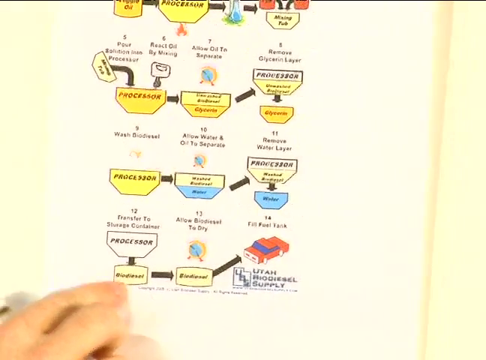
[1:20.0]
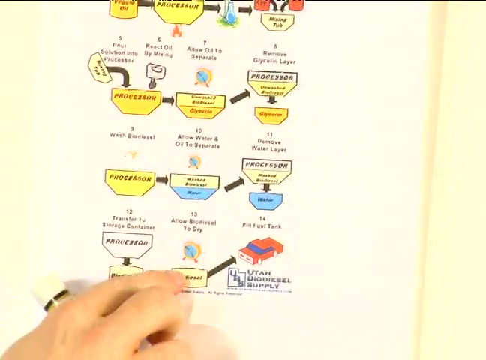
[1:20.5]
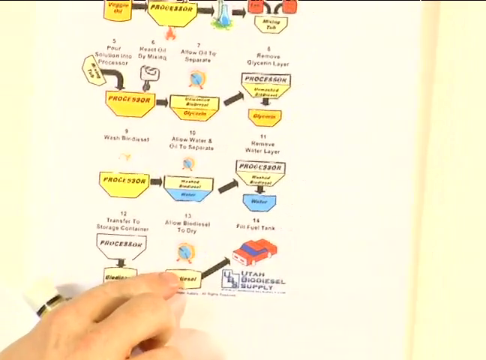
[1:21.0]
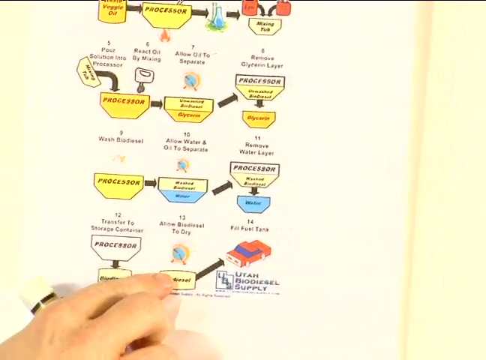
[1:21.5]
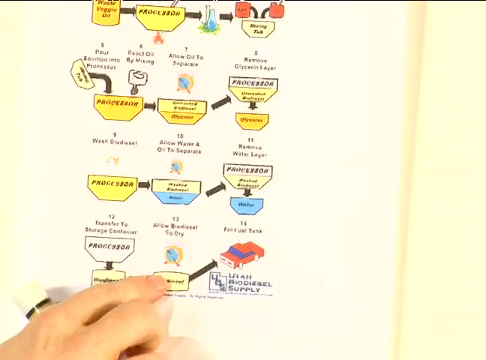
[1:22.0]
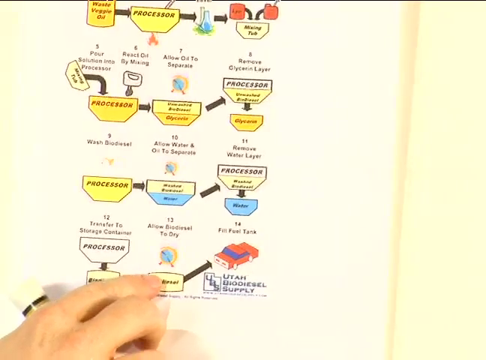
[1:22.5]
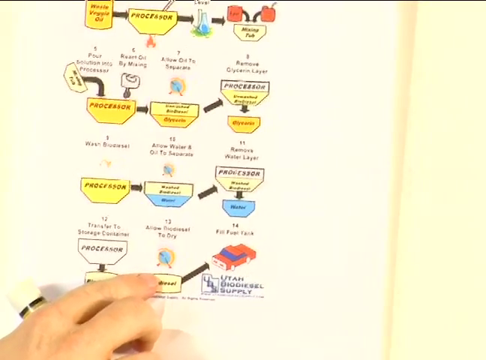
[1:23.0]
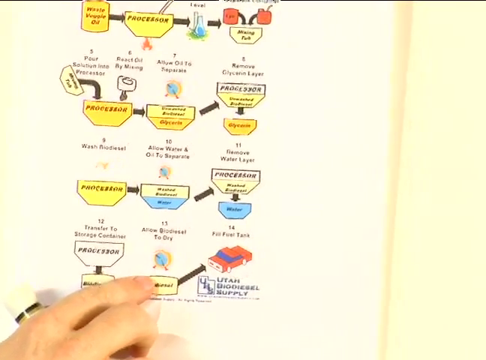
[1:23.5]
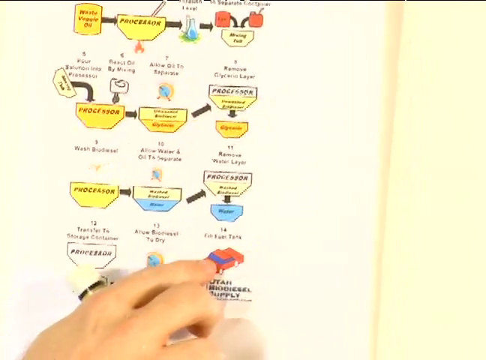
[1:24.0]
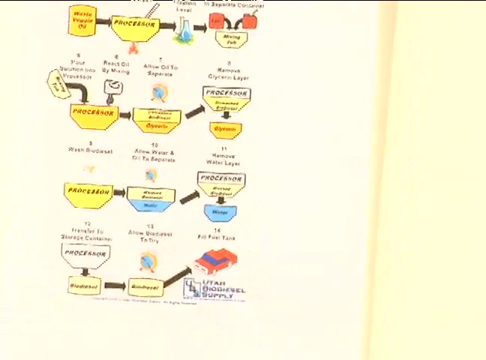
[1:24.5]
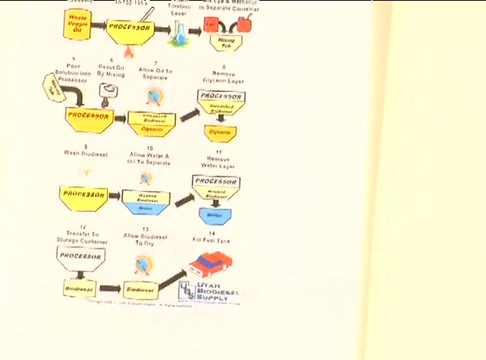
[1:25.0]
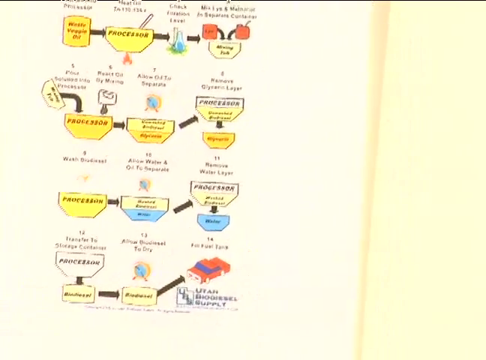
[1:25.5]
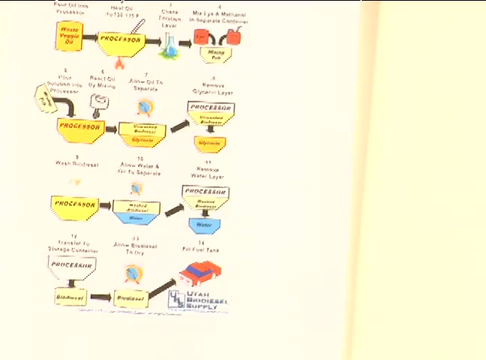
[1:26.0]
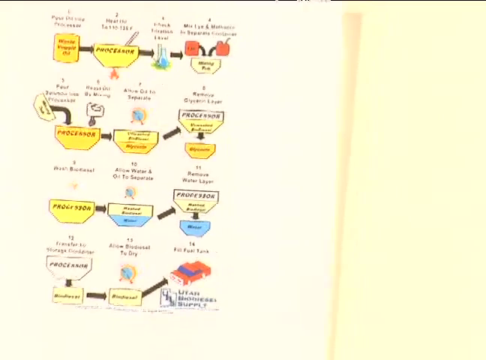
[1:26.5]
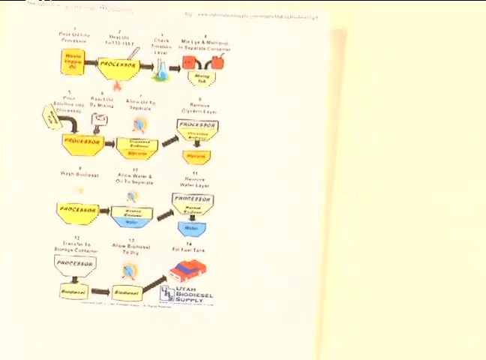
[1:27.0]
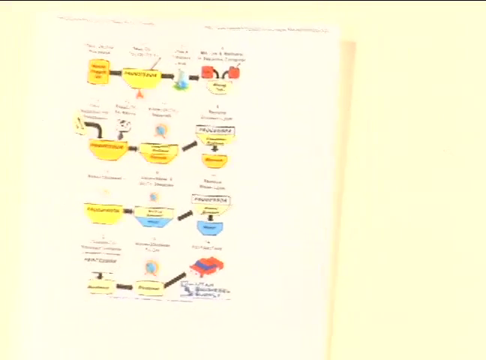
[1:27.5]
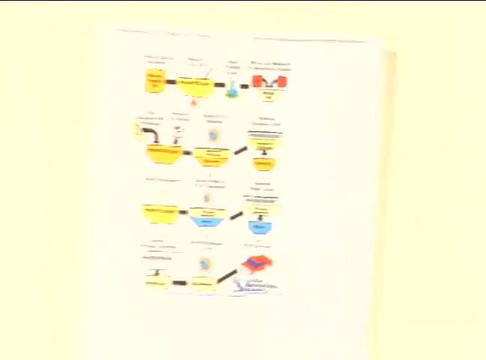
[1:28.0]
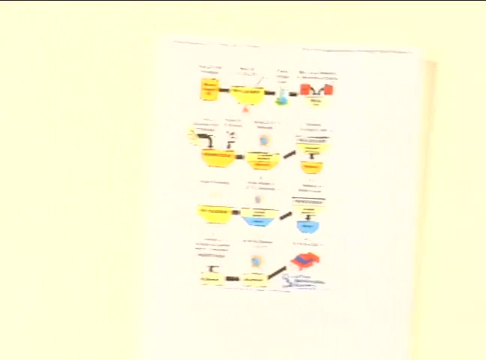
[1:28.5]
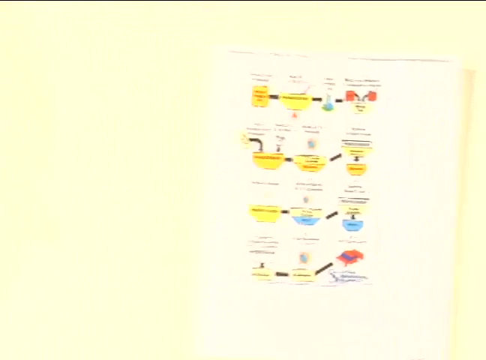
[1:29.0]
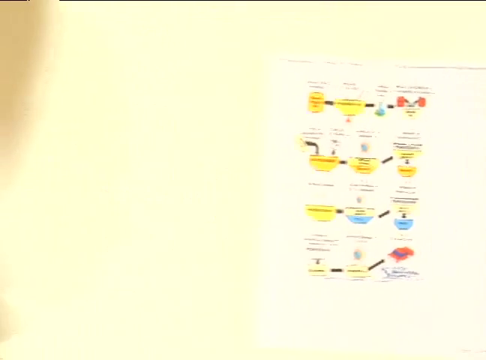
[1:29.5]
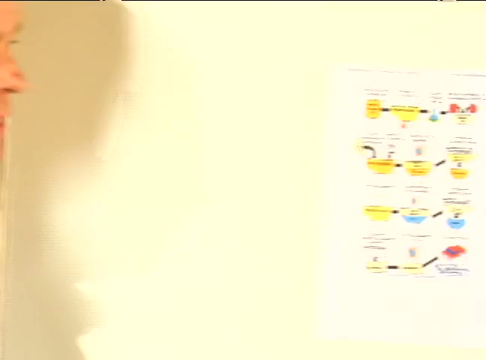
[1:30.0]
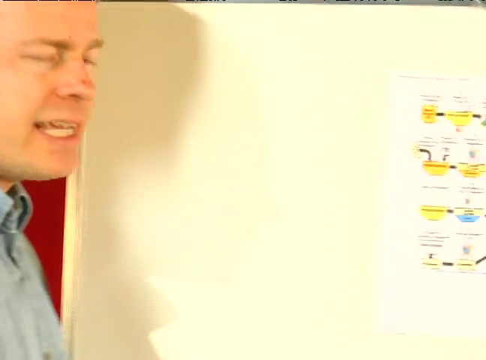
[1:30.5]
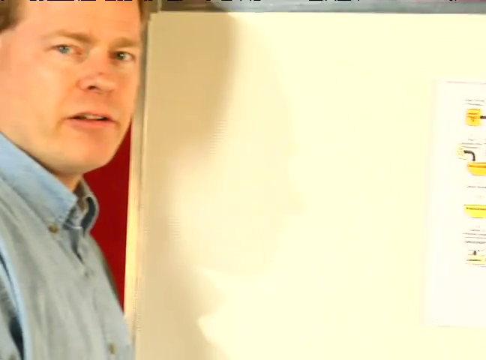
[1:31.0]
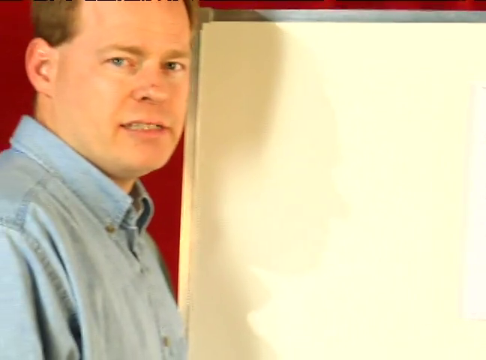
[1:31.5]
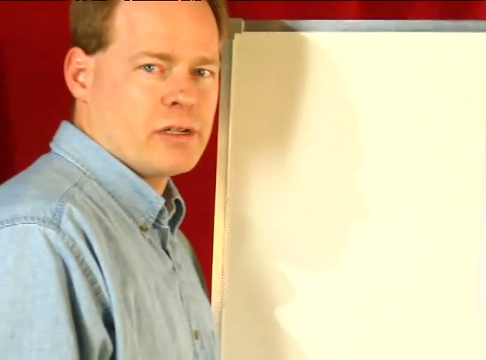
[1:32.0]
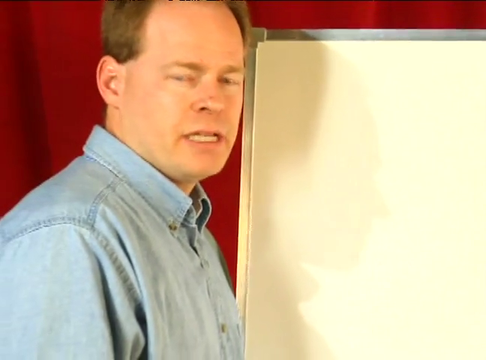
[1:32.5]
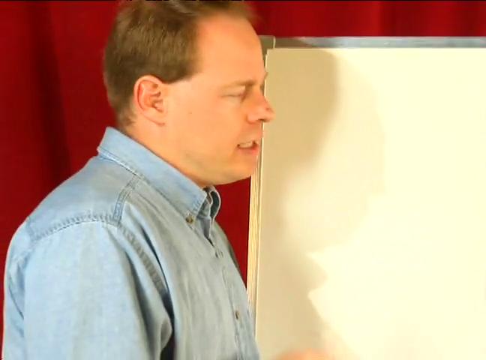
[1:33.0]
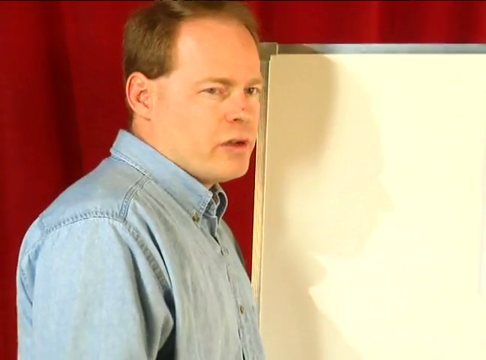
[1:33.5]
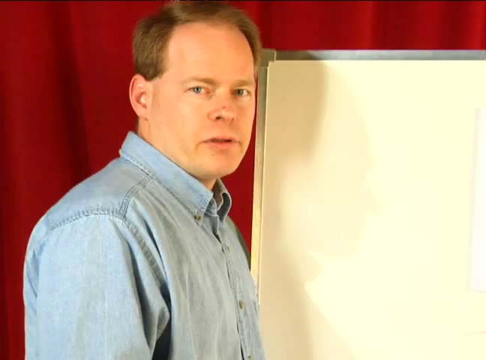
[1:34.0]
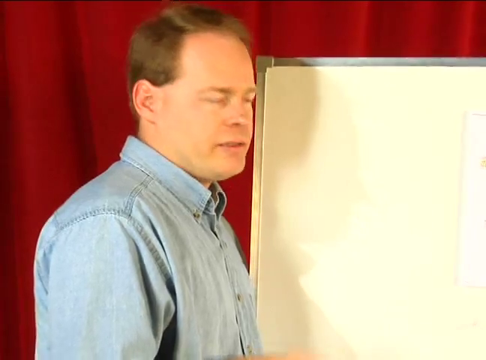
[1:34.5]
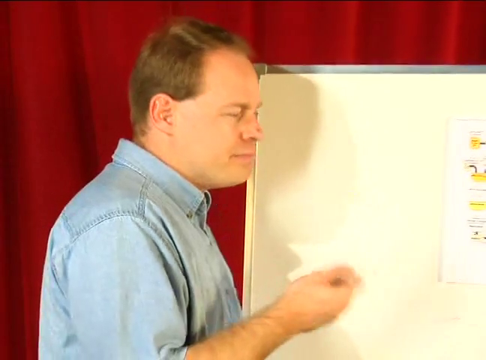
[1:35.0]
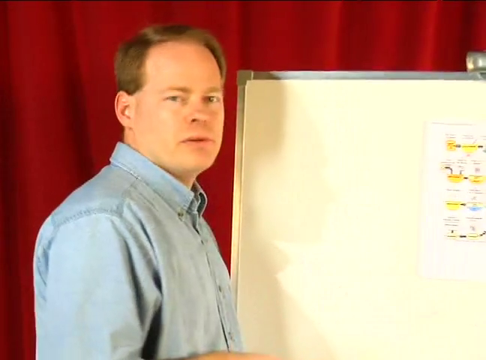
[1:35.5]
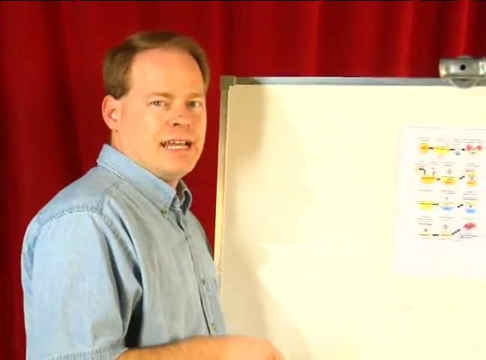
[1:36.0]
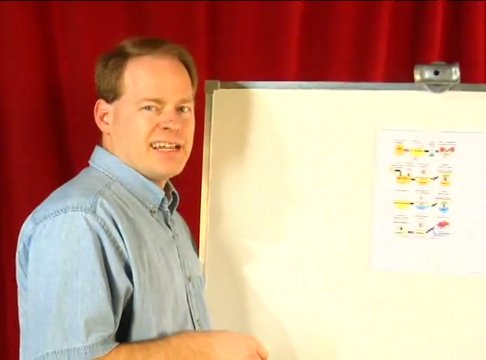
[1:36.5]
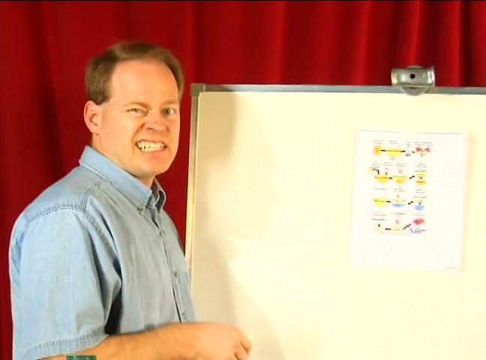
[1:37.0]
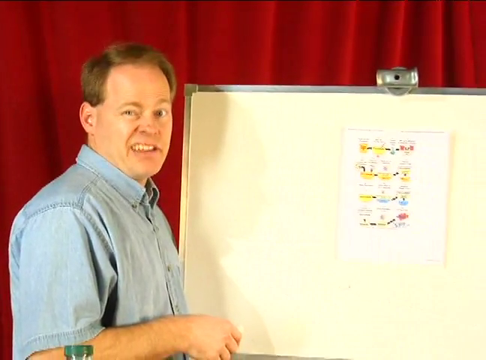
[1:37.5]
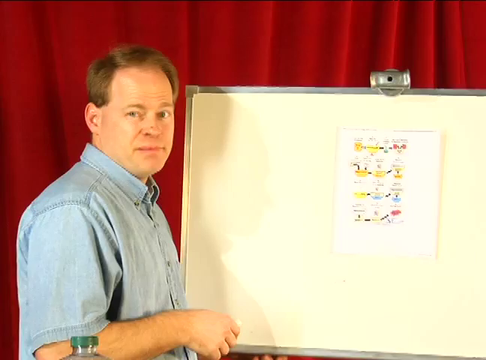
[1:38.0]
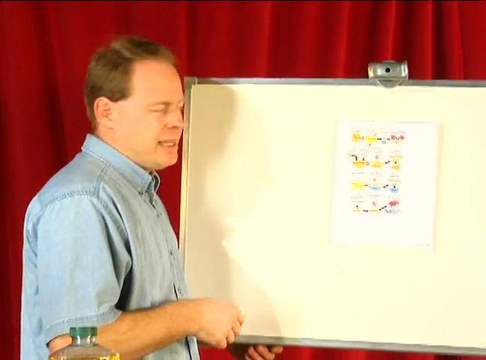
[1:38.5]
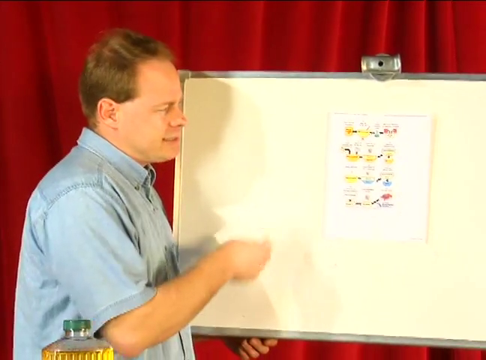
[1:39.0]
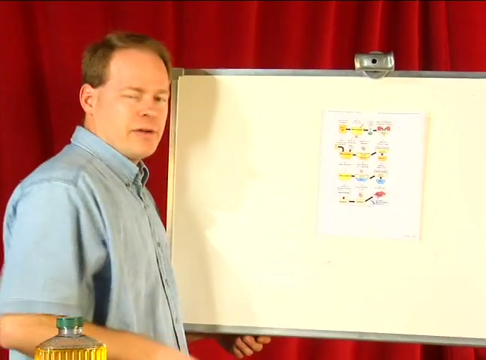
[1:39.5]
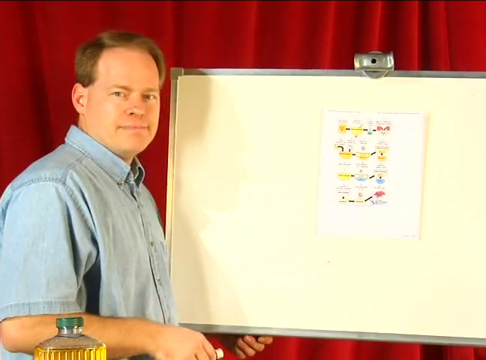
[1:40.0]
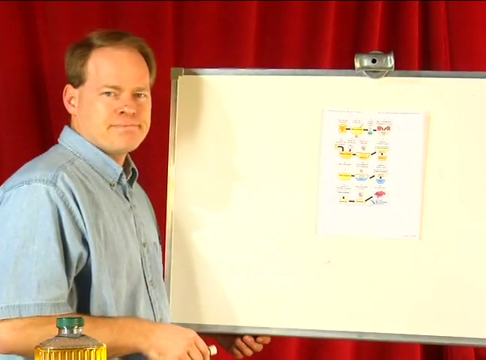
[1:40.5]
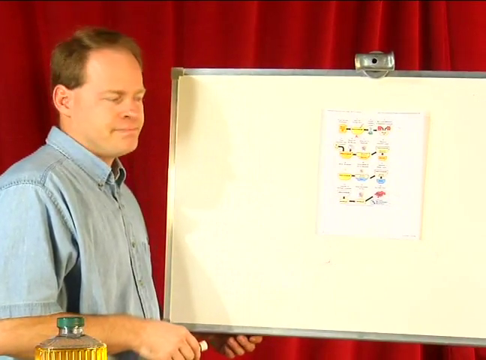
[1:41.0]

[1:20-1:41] The full overview of all the steps is visible, and it looks like an experiment to produce biodiesel. Each step is numbered and illustrated, running in order from top to bottom: pour oil into the processor, heat oil, check filtration level, mix lye and methanol in separate containers, pour solution into processor, react oil by mixing, allow oil to separate, remove glycerin layer, then wash biodiesel, allow water and oil to separate, and remove the water layer. The final steps are step 12, "transfer to storage container", step 13, apparently "allow biodiesel to dry", and the last step, "fill fuel". The camera pulls back to show the man who is explaining the experiment.